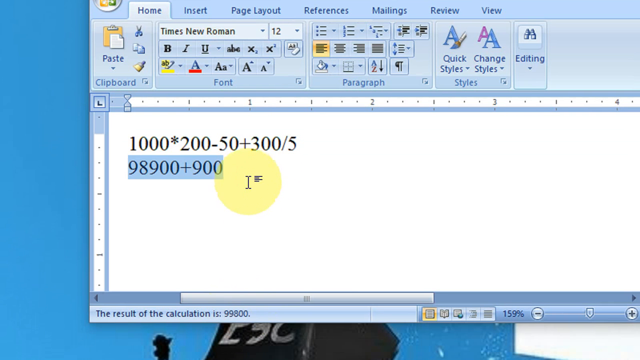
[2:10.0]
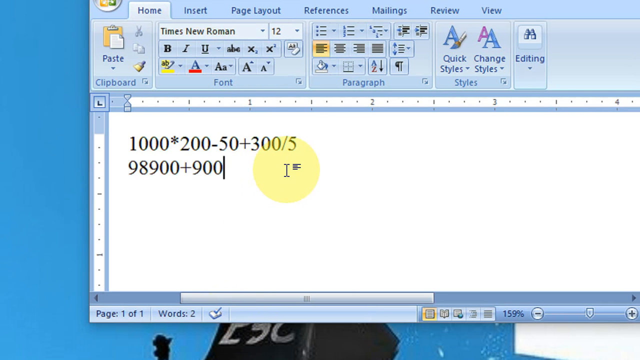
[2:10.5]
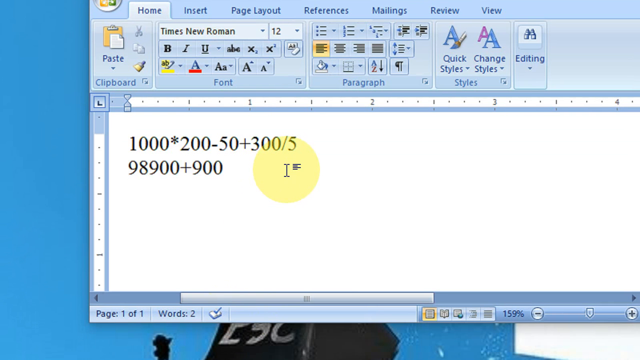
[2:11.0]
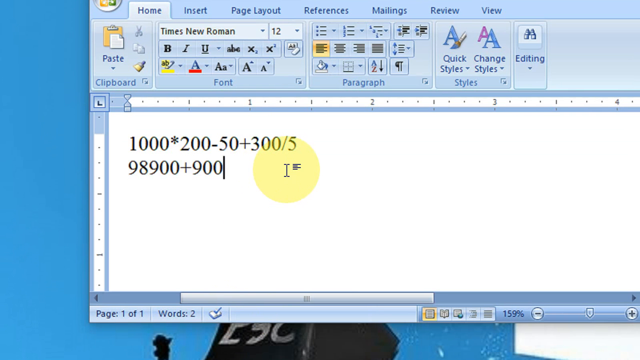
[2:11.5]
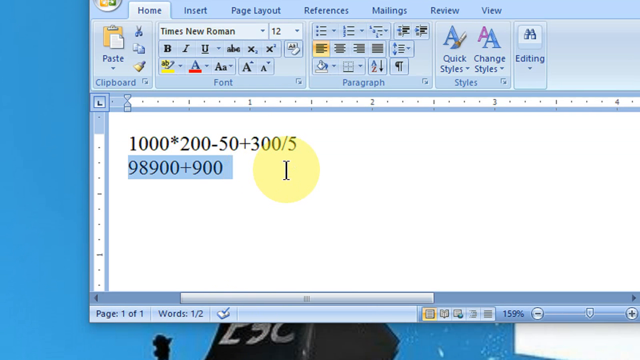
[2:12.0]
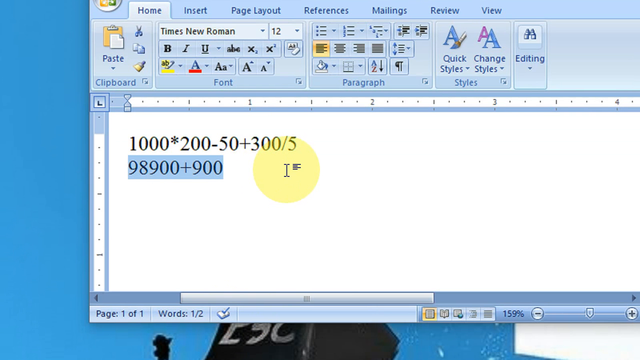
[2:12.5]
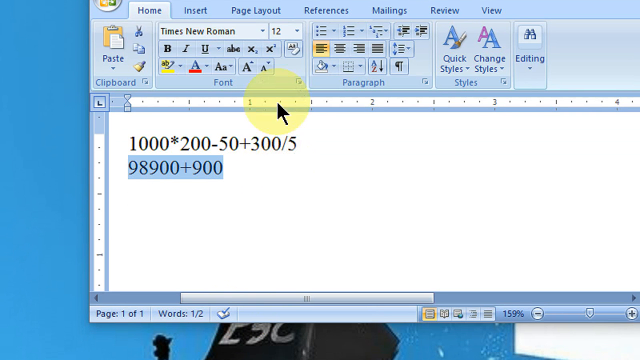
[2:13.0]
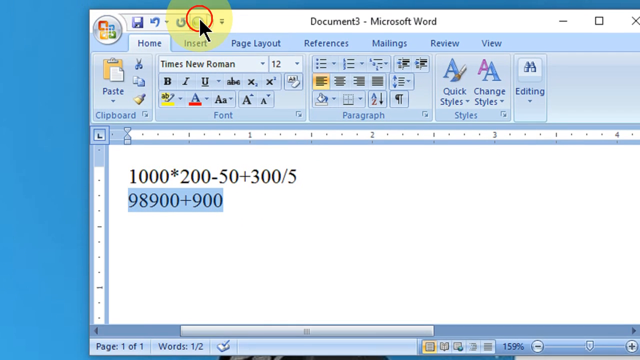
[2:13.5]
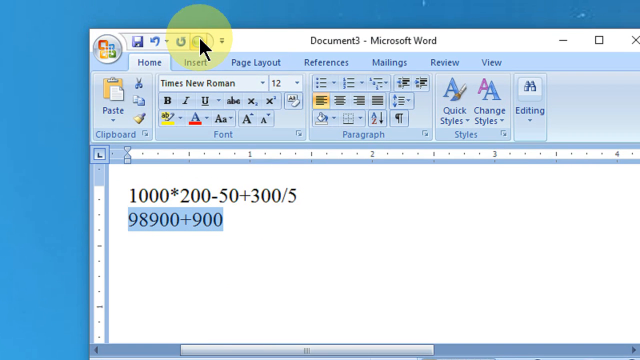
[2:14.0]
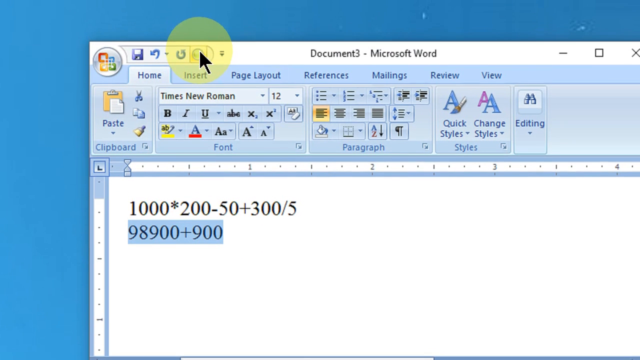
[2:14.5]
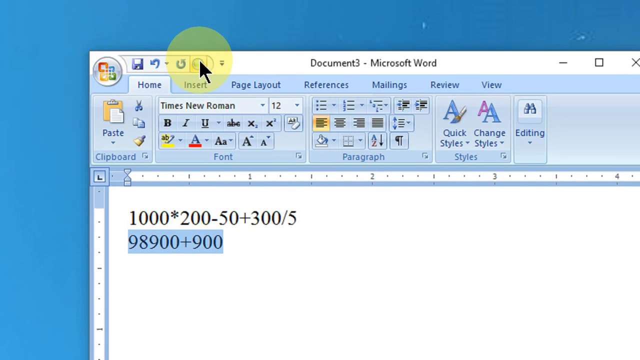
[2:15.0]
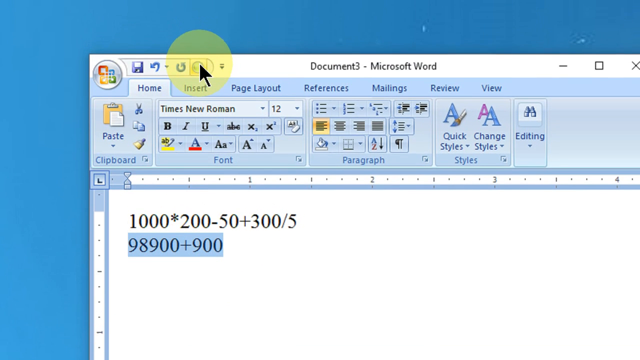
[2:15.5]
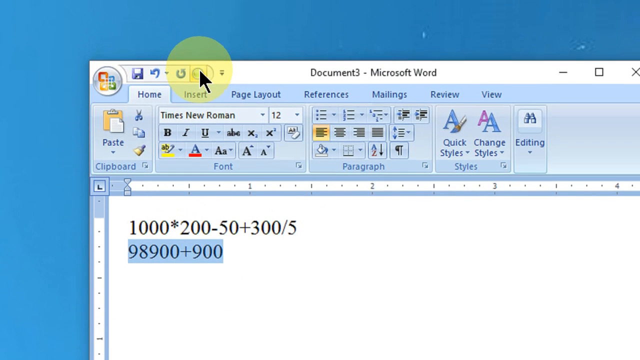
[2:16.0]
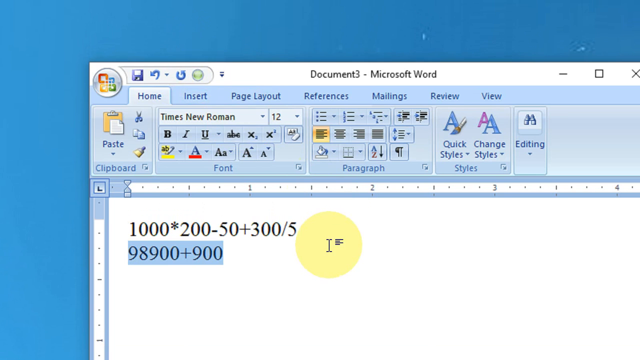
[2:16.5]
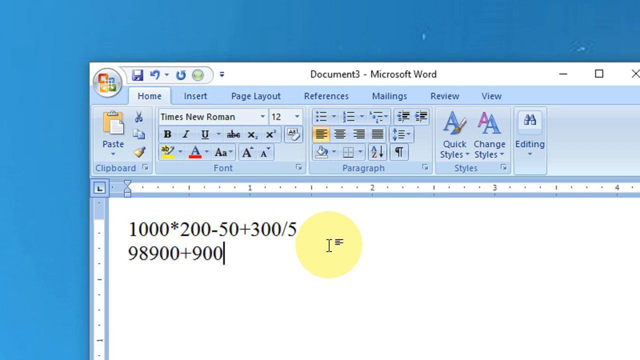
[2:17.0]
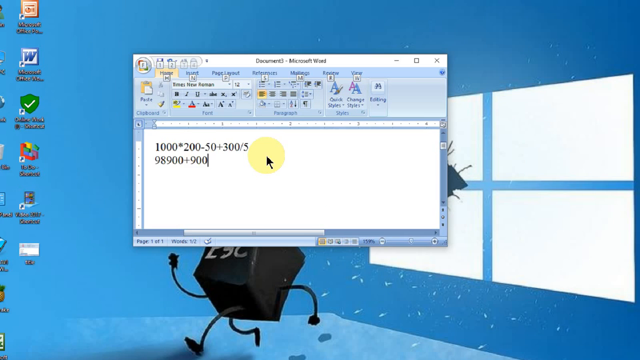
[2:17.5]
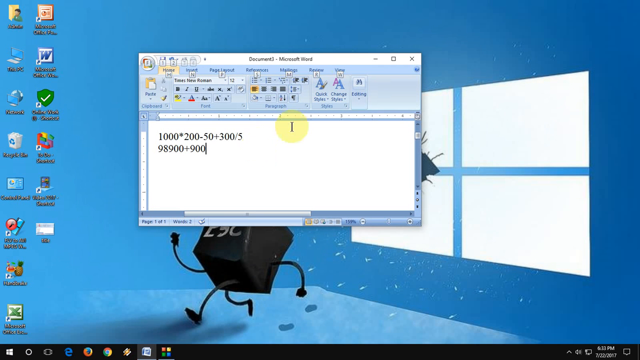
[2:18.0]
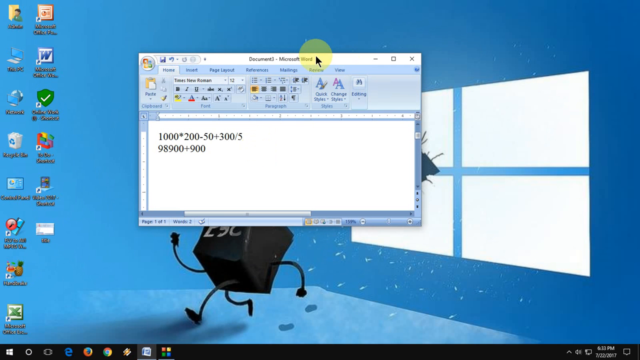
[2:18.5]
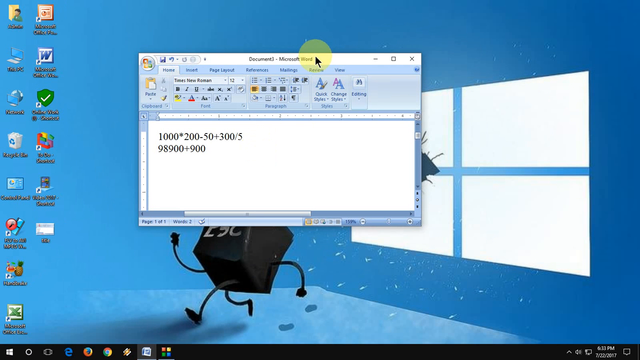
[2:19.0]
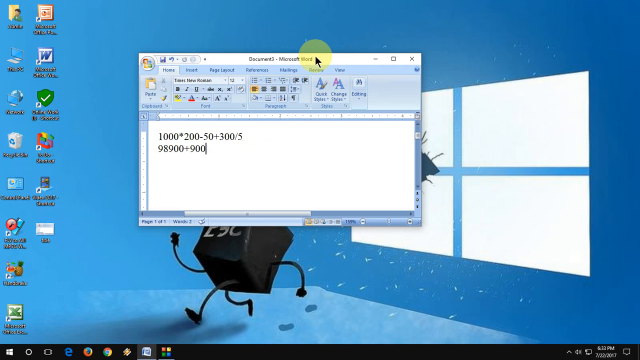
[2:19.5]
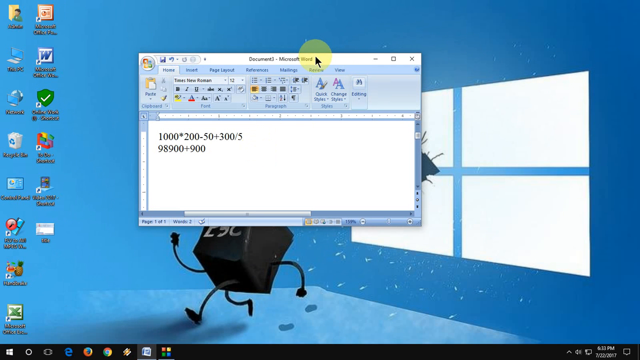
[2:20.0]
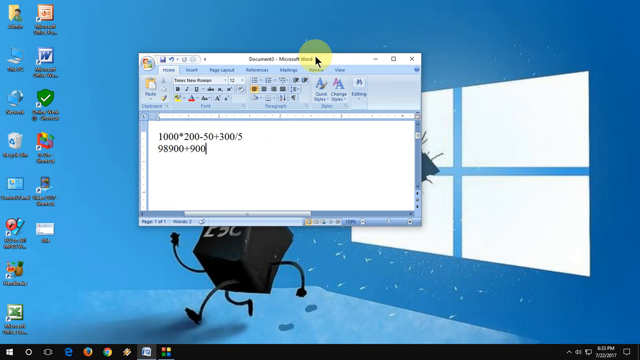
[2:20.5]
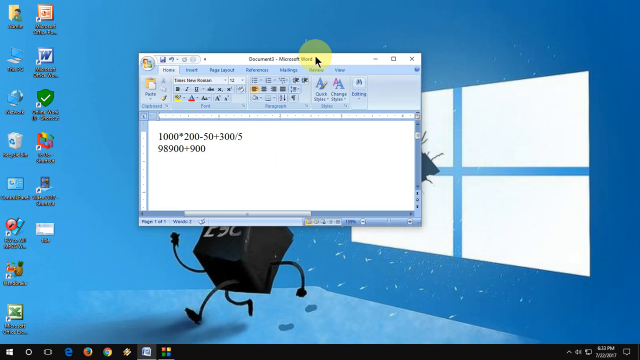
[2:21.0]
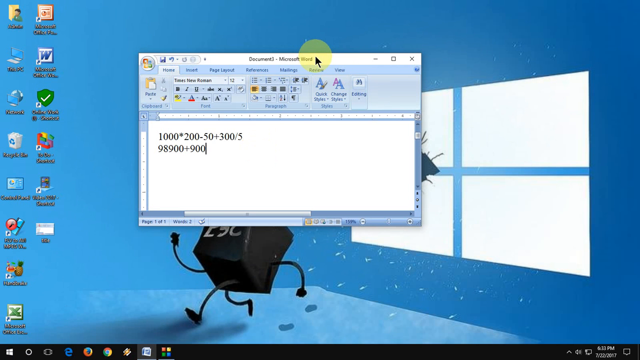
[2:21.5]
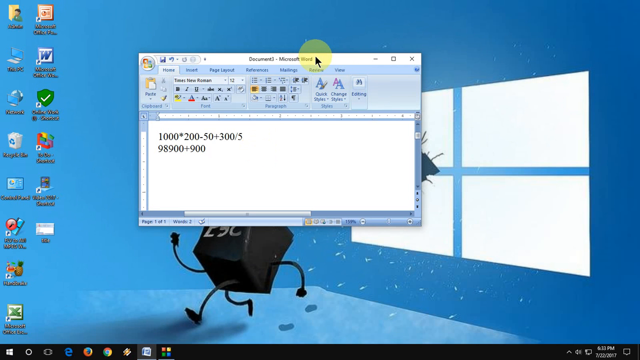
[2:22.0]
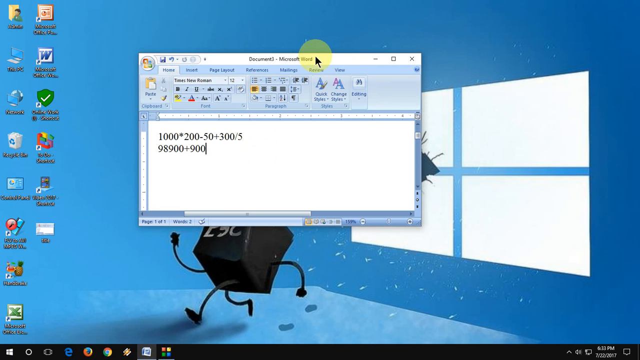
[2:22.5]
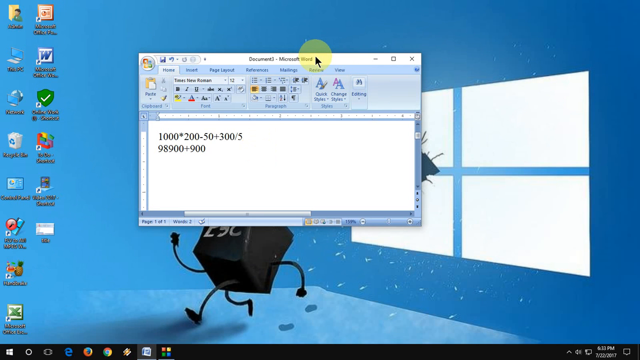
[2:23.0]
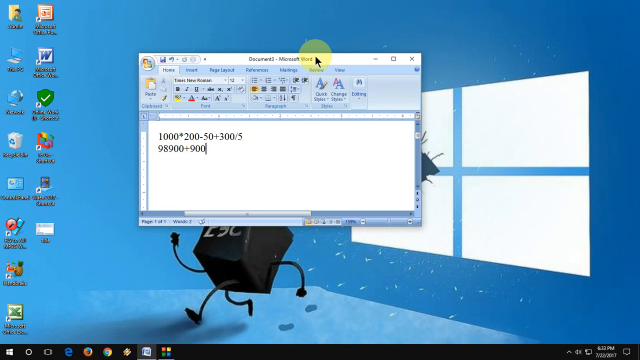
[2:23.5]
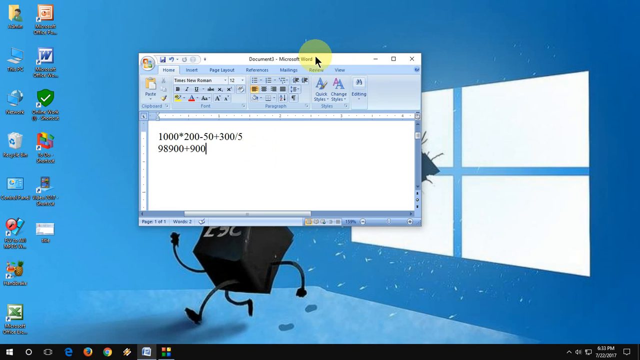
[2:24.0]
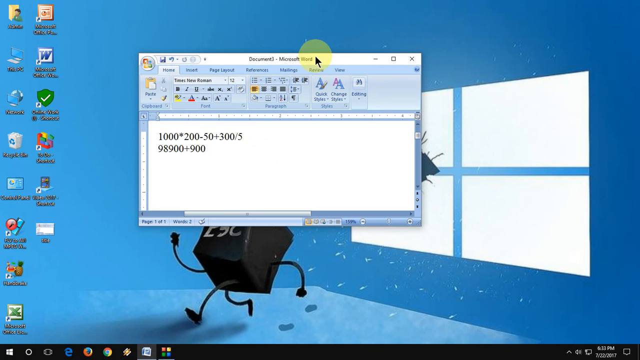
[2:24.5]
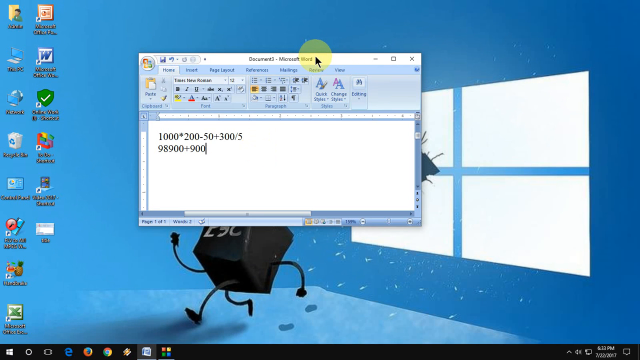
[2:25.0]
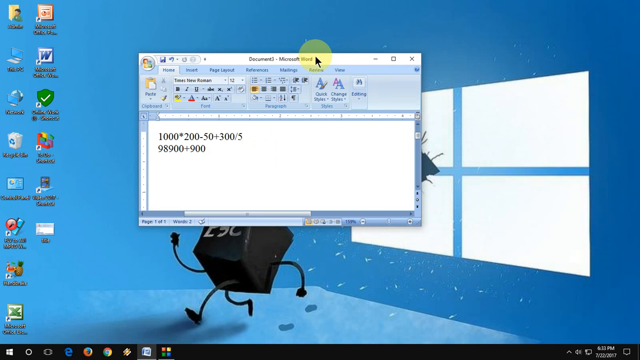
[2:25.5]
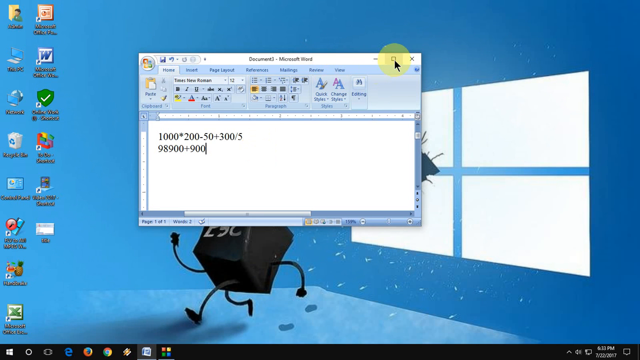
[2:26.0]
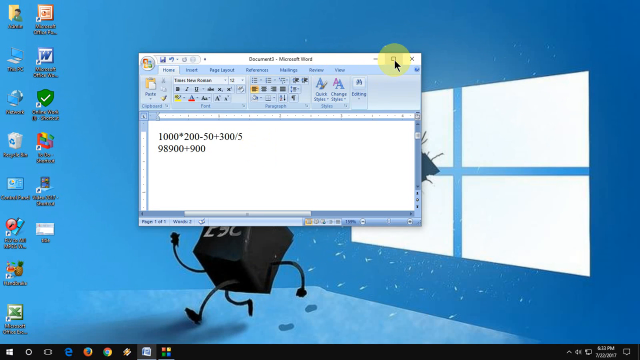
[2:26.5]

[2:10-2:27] The user again highlights the text 98900 plus 900 and moves the cursor to the globe icon at the top left of the page; the red ripple effect appears again to indicate the click. The entire screen then zooms out again to a wider view of the user's screen, with the Document One Microsoft Word application window in a windowed configuration in the center of the screen. The wallpaper is visible: a Windows icon with a blue background and an Escape key walking across a table. Icons on the desktop include Microsoft Office, an antivirus icon, Microsoft Excel, the recycle bin, the My Computer icon, and a series of document icons for different directories on the computer.